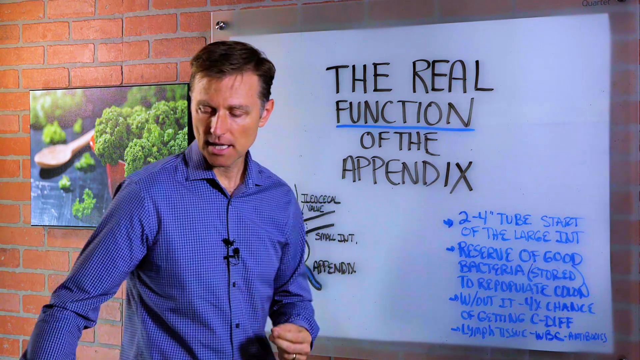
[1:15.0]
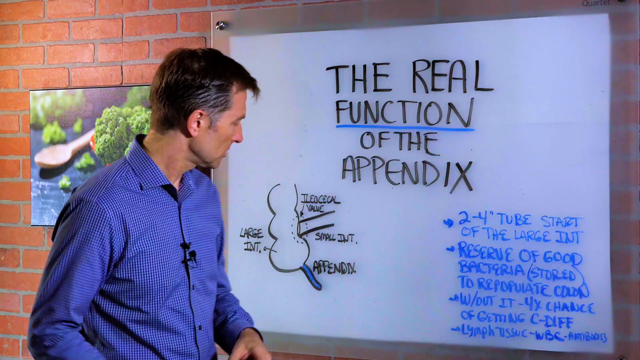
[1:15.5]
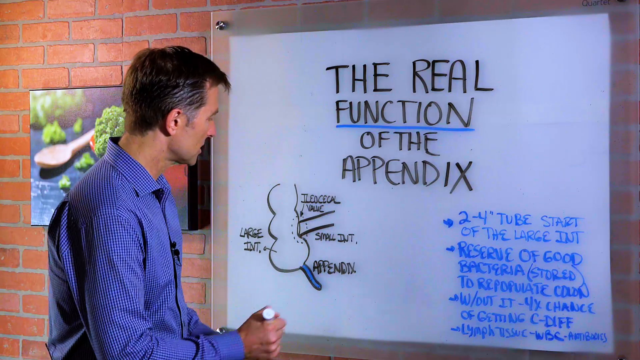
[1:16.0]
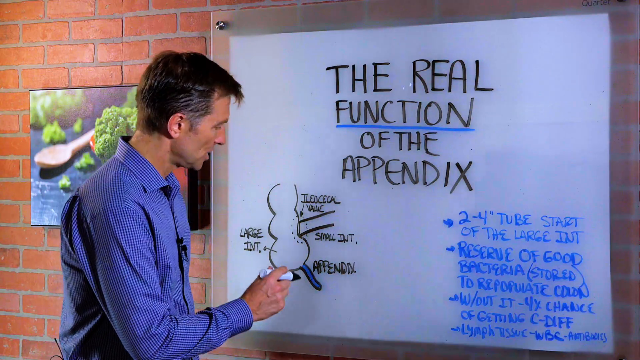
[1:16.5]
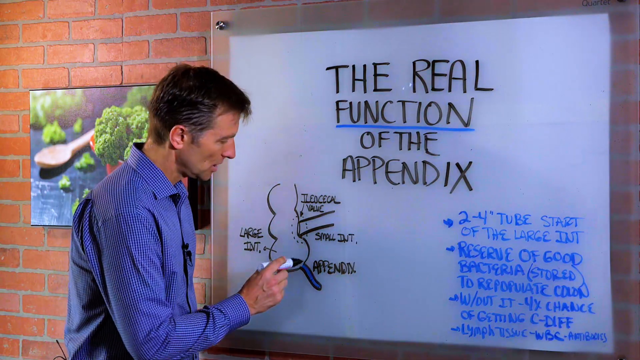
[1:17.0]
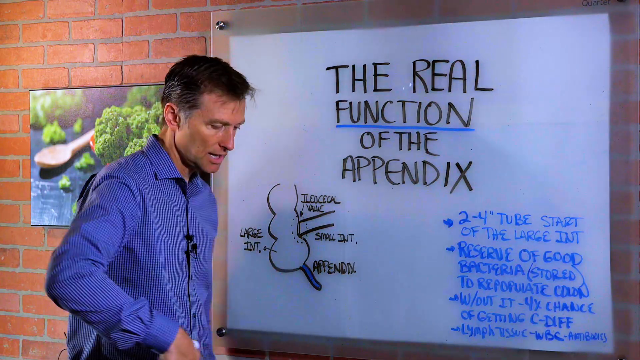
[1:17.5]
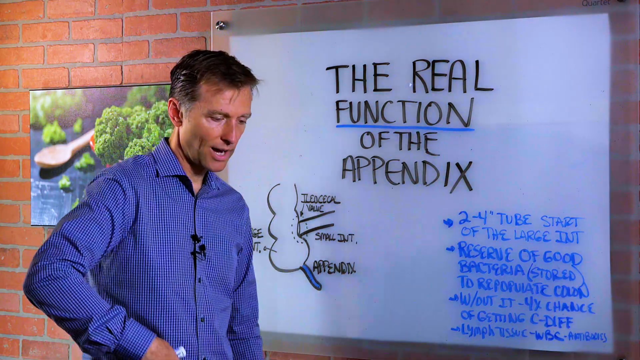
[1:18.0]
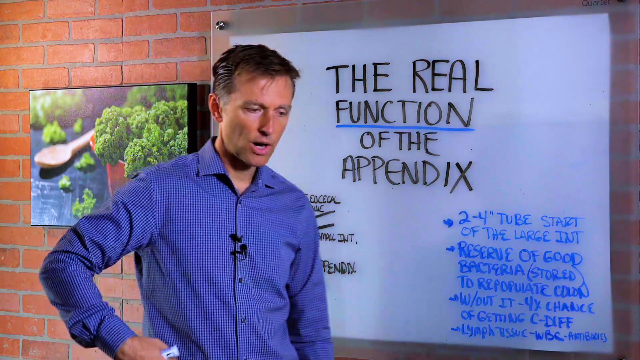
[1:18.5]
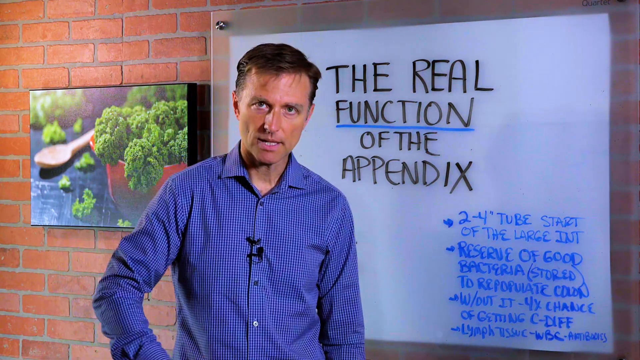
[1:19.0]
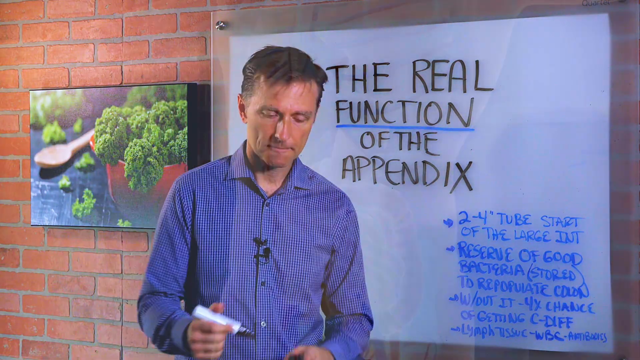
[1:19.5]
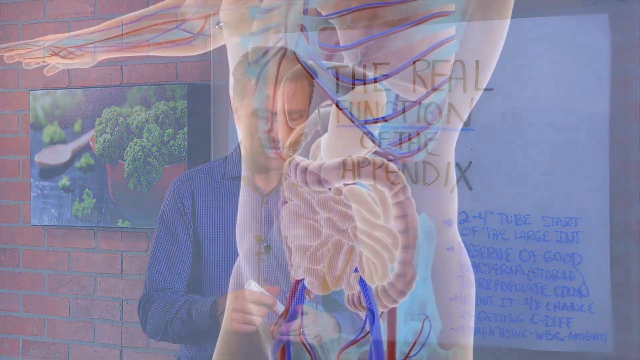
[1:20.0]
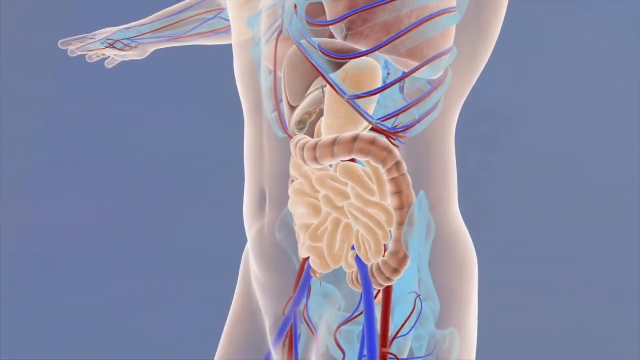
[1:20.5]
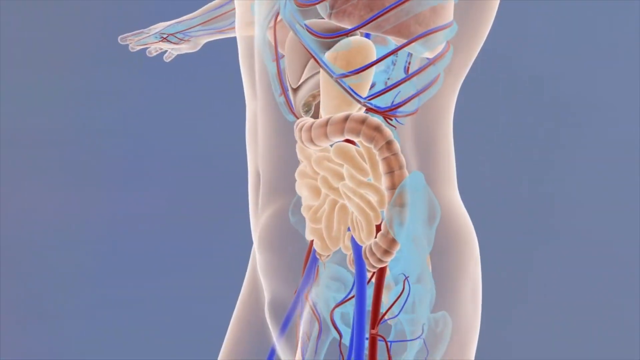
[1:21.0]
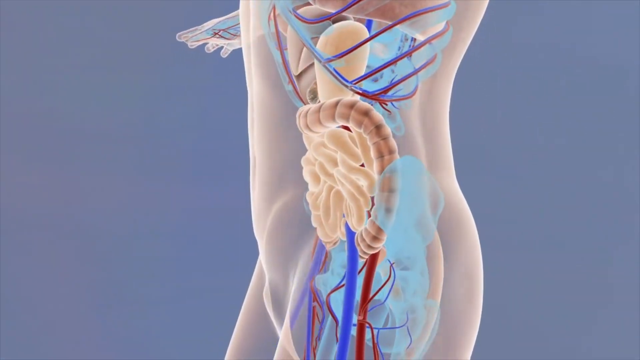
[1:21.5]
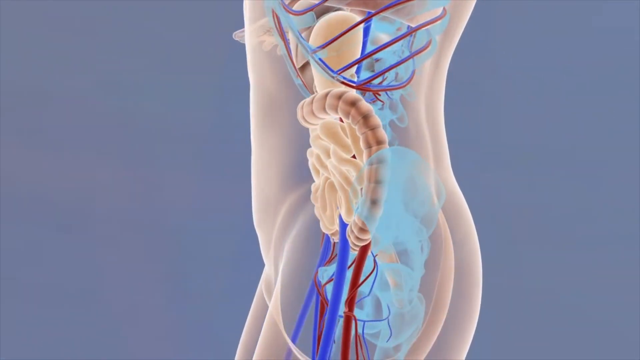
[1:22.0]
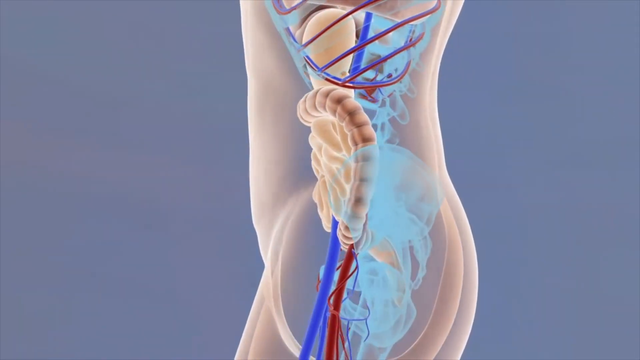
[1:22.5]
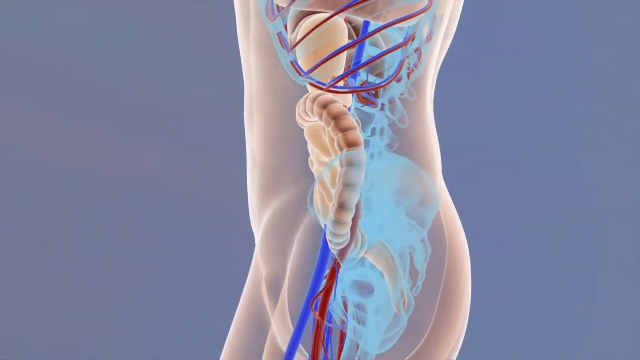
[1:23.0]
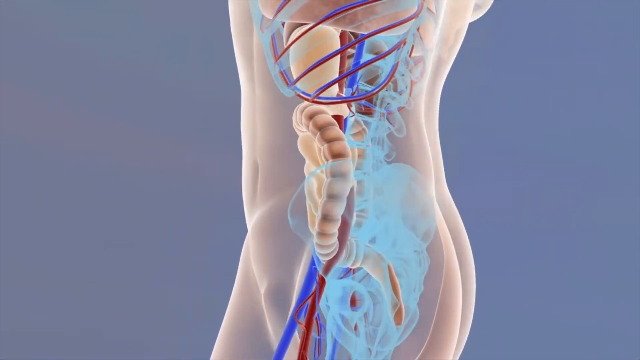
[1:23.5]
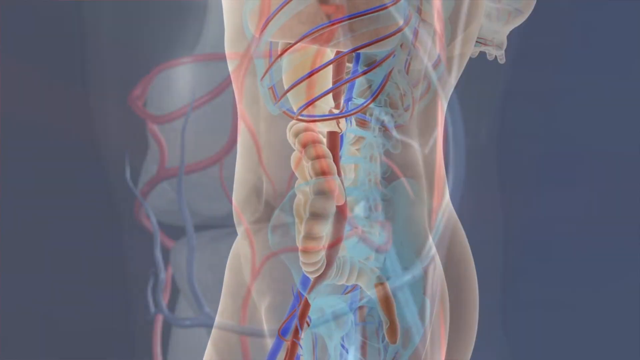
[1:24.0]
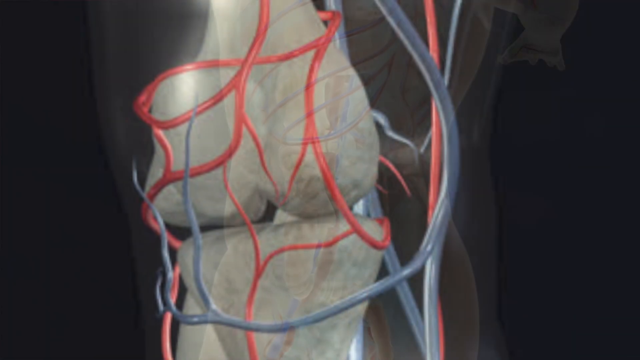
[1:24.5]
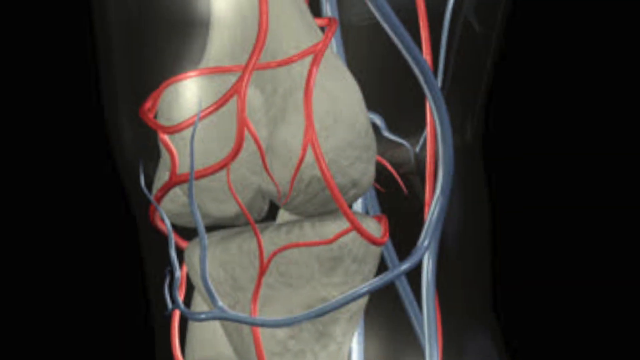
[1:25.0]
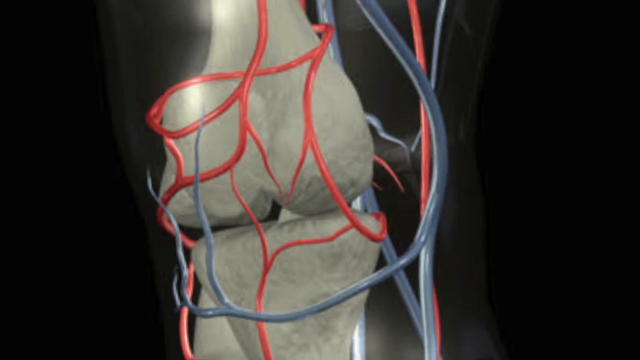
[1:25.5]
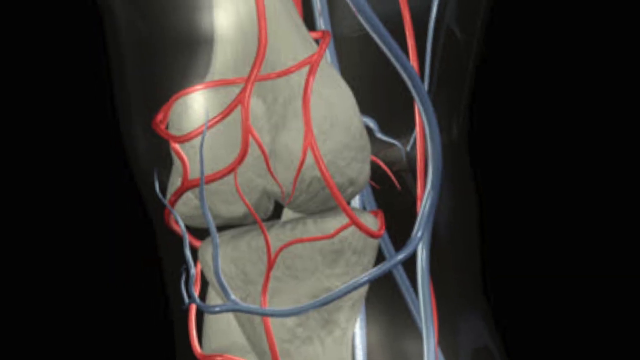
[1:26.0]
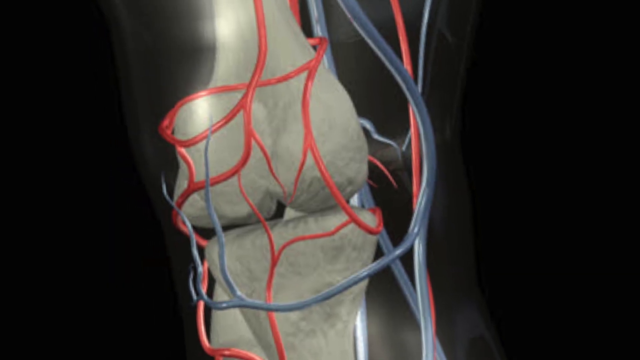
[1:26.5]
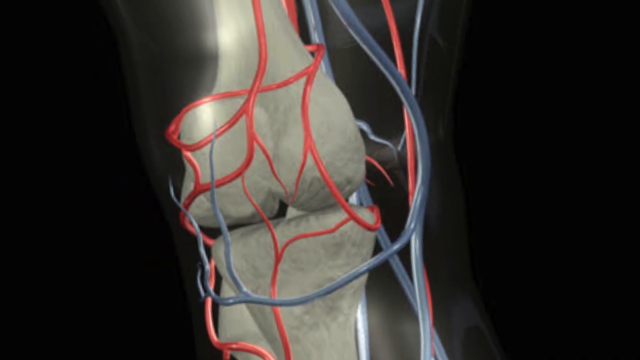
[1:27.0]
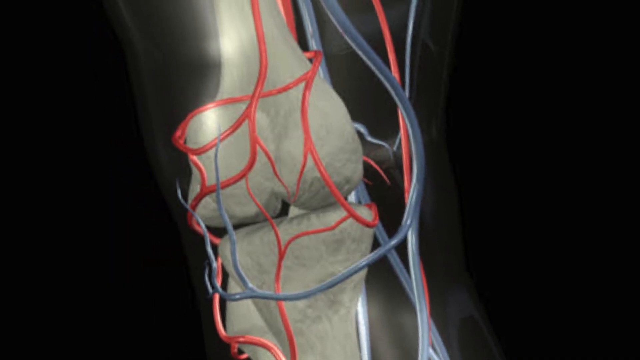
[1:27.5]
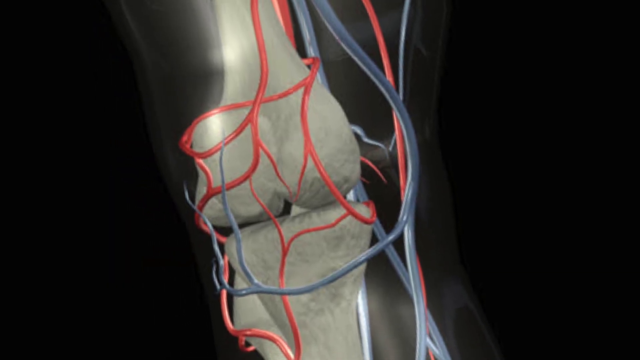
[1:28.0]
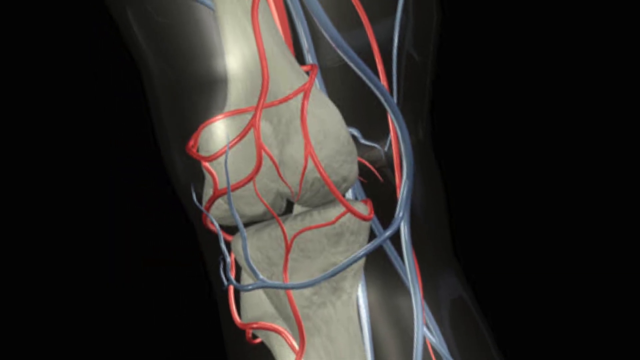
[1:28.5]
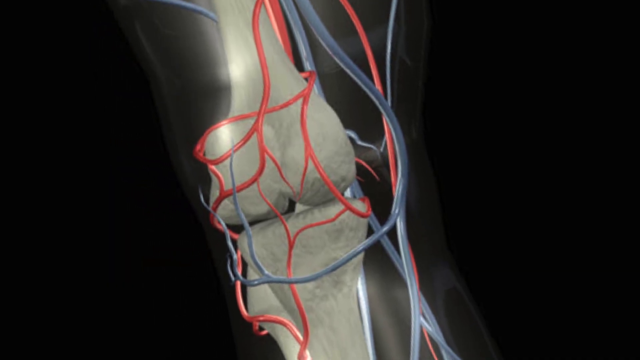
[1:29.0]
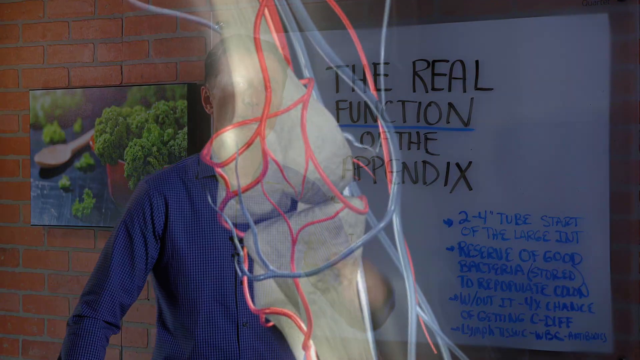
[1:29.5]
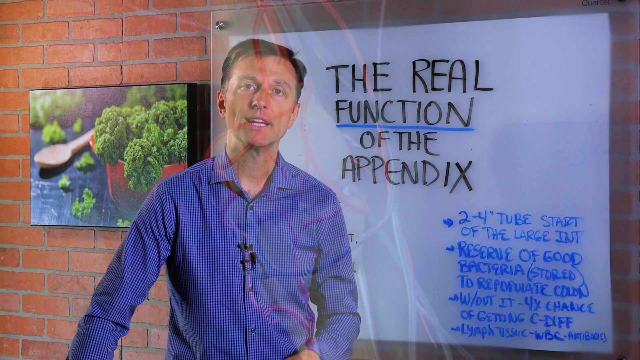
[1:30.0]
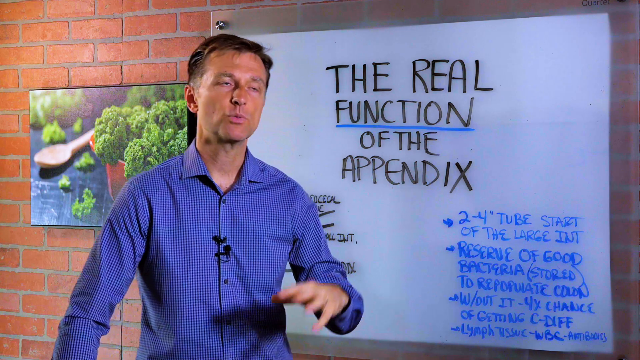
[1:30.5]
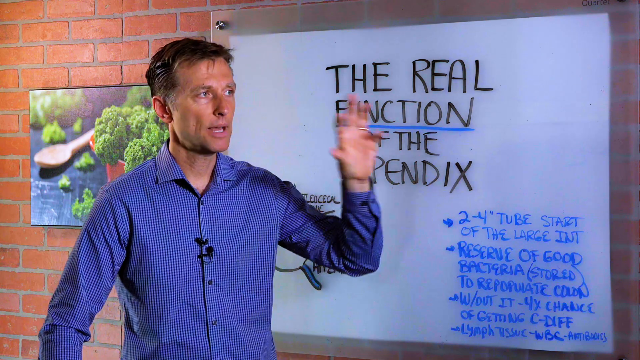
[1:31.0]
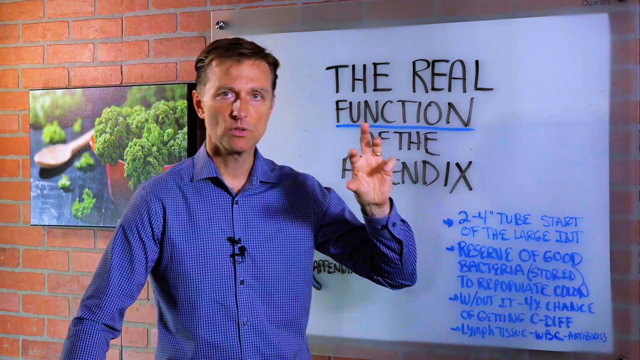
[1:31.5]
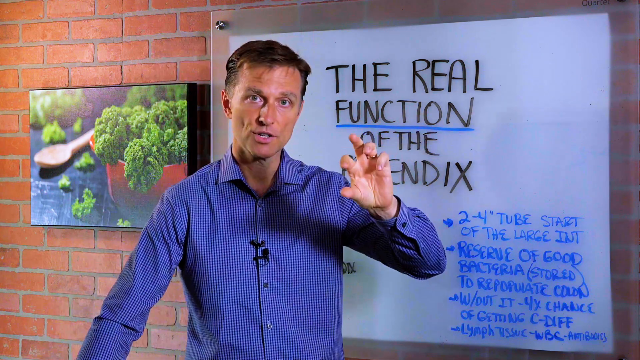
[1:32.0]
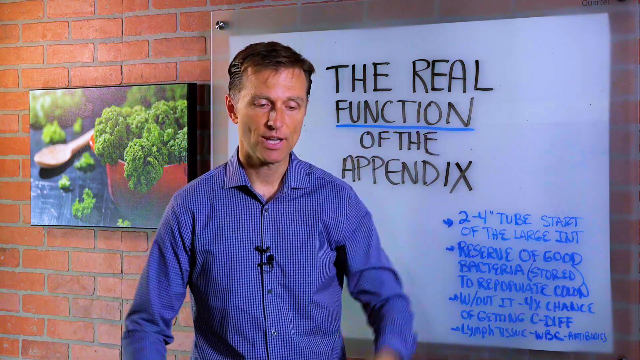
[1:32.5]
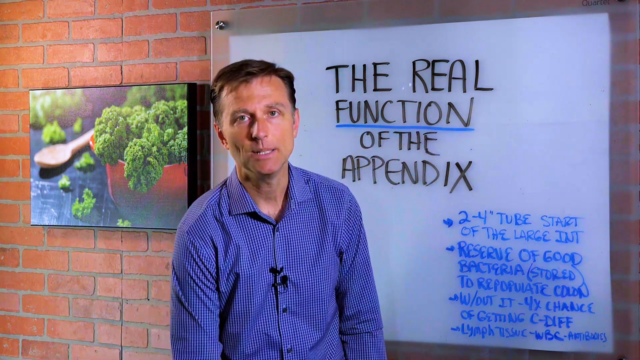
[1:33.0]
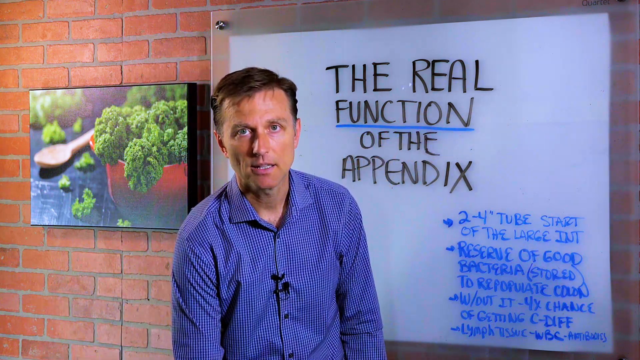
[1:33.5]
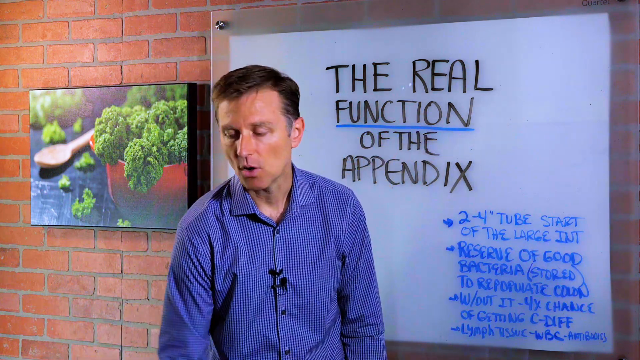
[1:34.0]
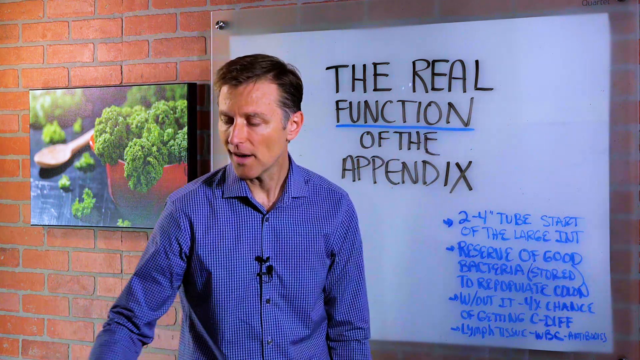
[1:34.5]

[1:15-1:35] An animated, x-ray-like zoomed-in view of a body shows the intestines. The view turns about half a circle around the figure, whose skin is see-through; the figure's arms are held straight out along both sides. Next appears what may be a knee or elbow joint, with no flesh, only red and blue veins around the bone. The doctor wears a long-sleeve shirt that looks professional and is very well pressed, with a small microphone clipped to it two buttons down. His brown hair is spiky at the front, 1990s-style, with a bit of gel and swept off to the side; he is not balding.